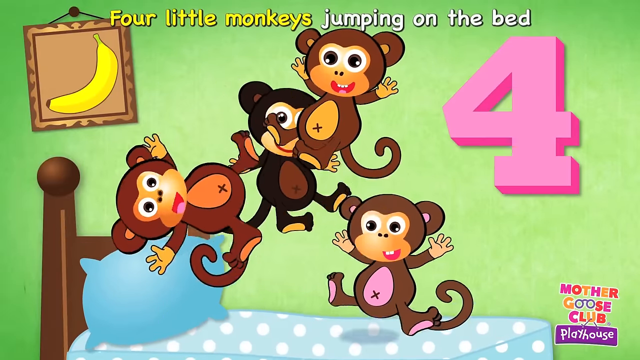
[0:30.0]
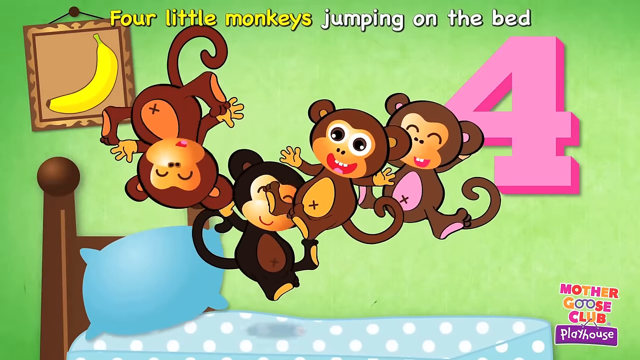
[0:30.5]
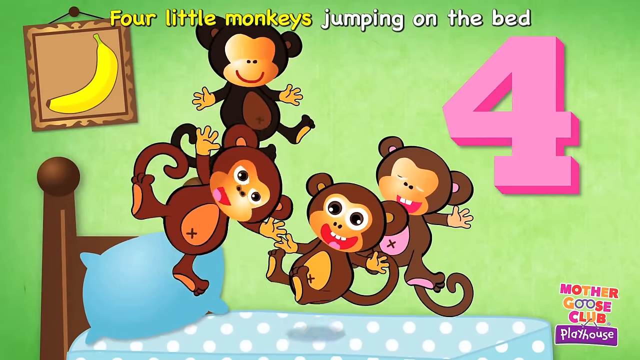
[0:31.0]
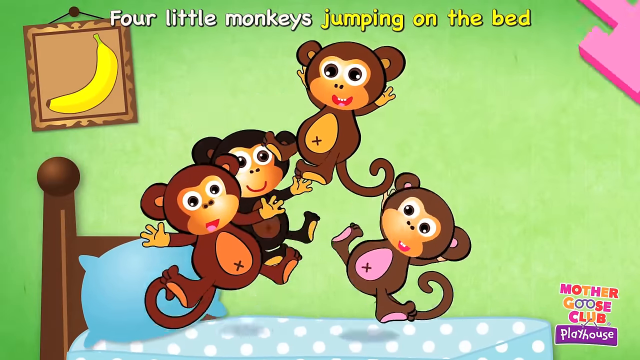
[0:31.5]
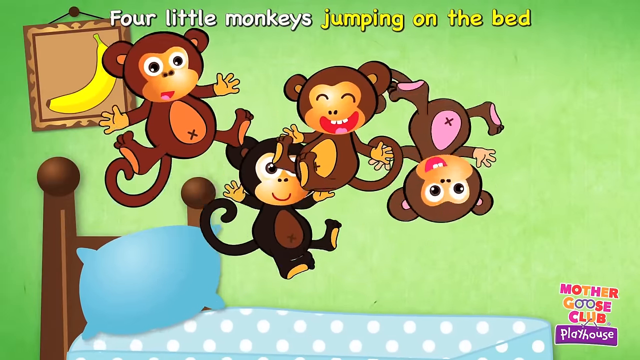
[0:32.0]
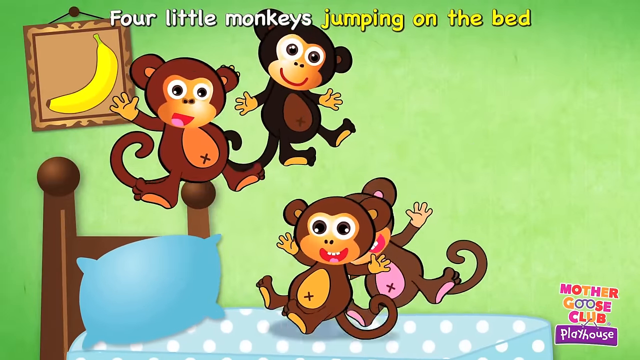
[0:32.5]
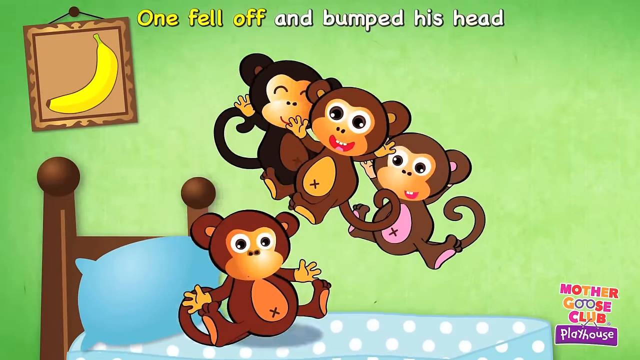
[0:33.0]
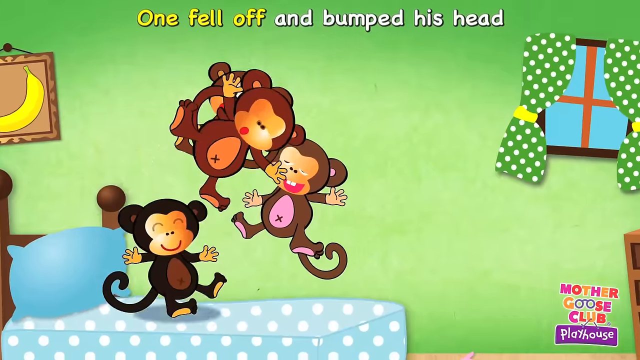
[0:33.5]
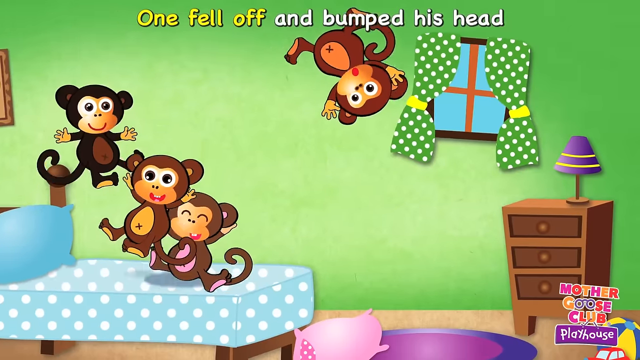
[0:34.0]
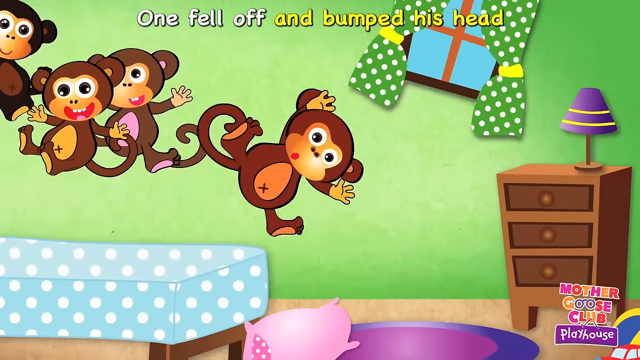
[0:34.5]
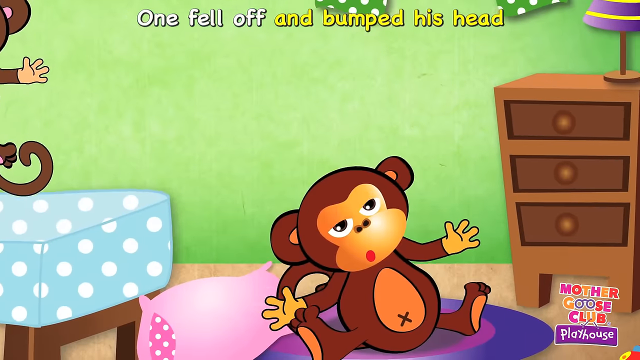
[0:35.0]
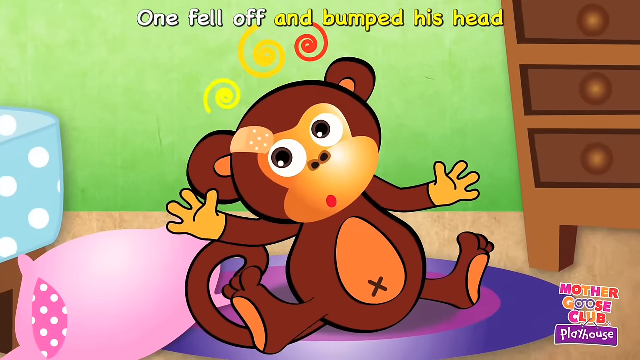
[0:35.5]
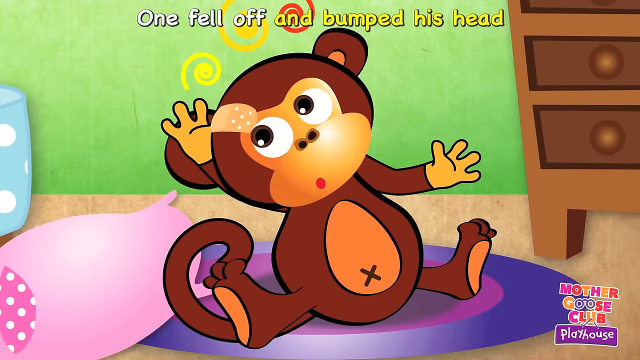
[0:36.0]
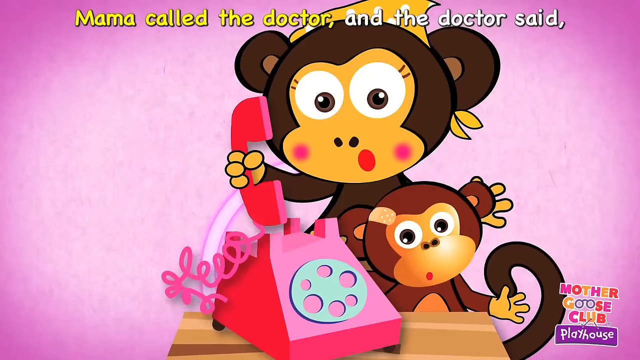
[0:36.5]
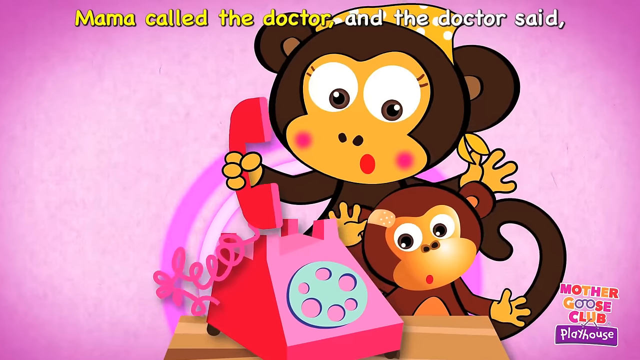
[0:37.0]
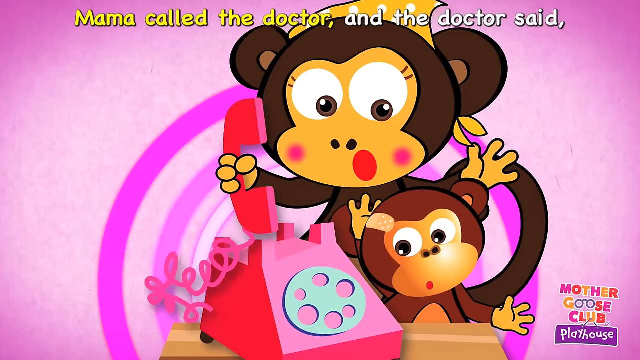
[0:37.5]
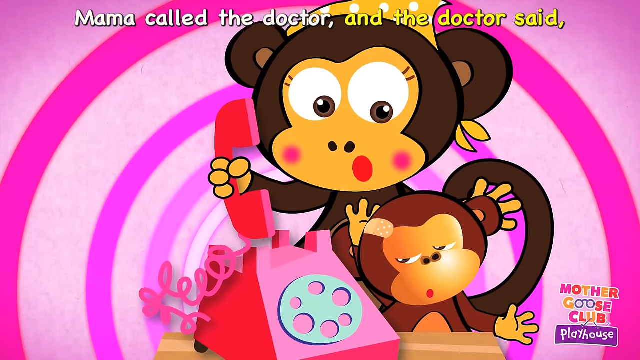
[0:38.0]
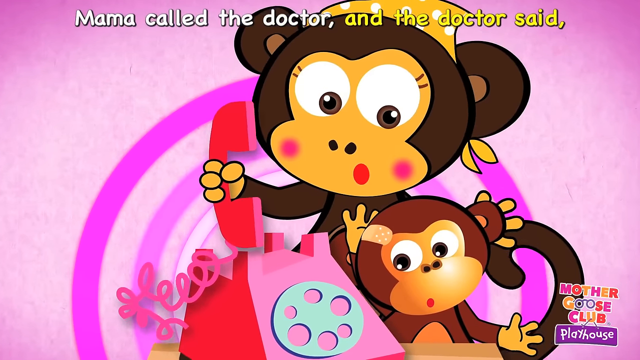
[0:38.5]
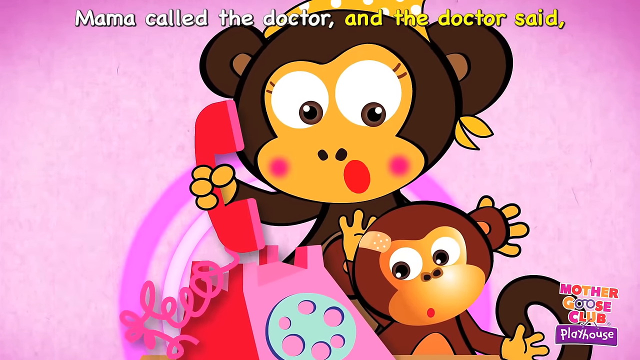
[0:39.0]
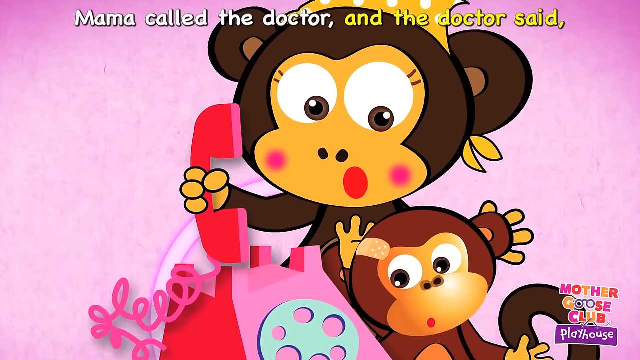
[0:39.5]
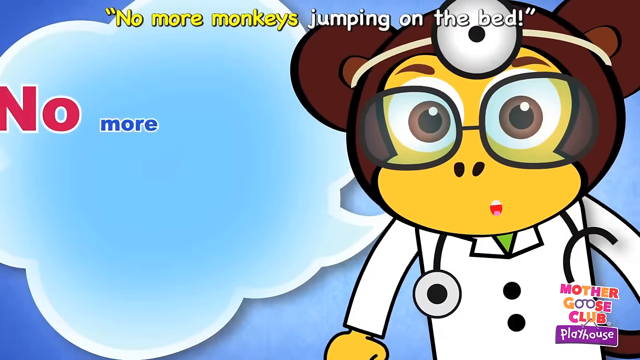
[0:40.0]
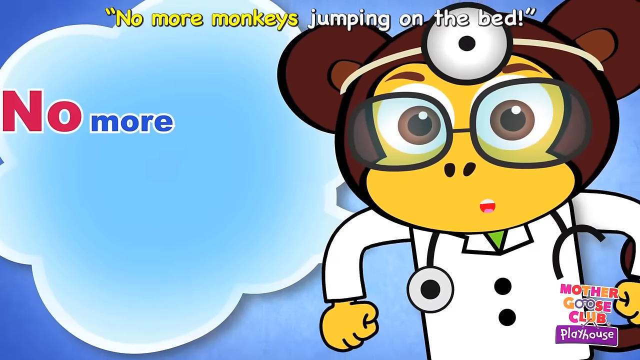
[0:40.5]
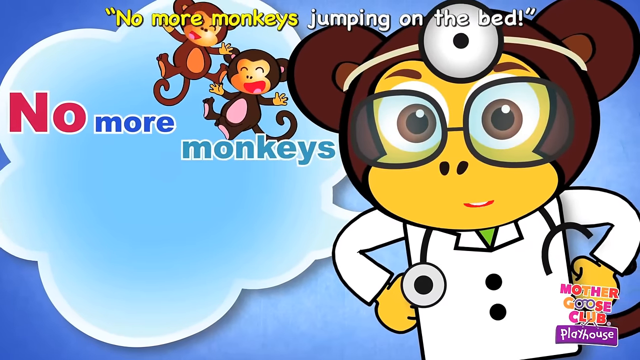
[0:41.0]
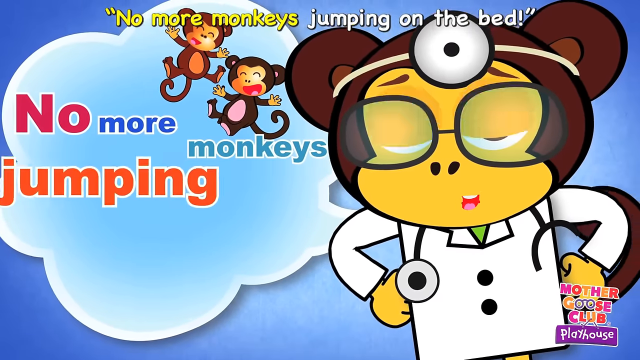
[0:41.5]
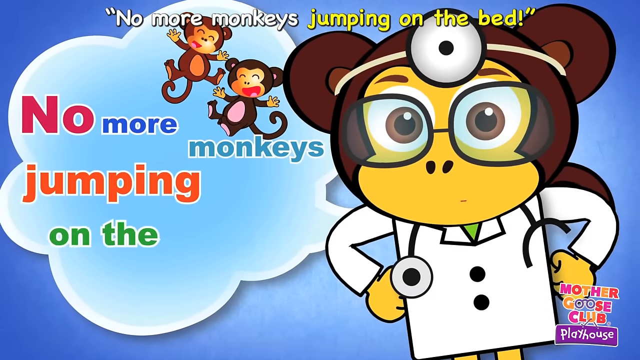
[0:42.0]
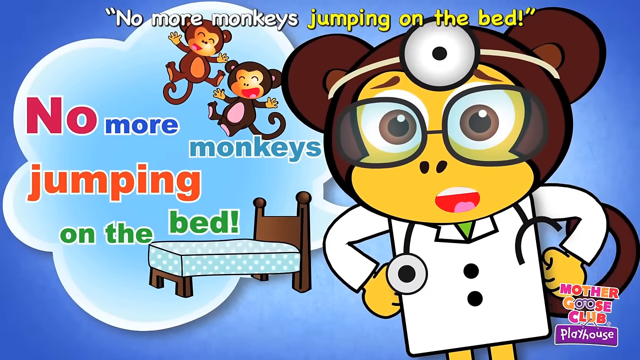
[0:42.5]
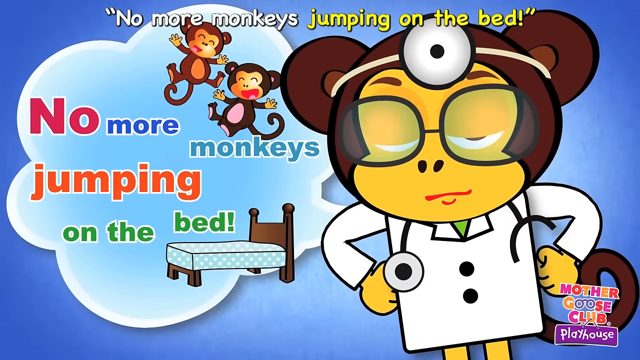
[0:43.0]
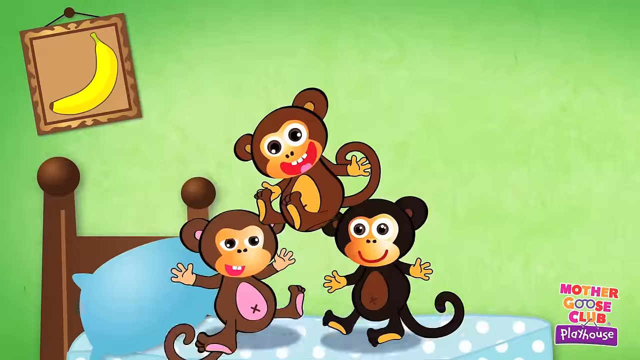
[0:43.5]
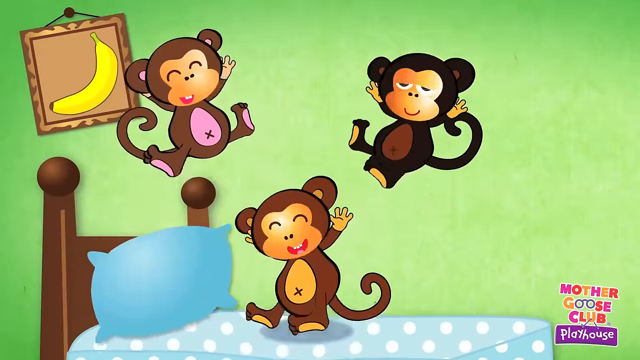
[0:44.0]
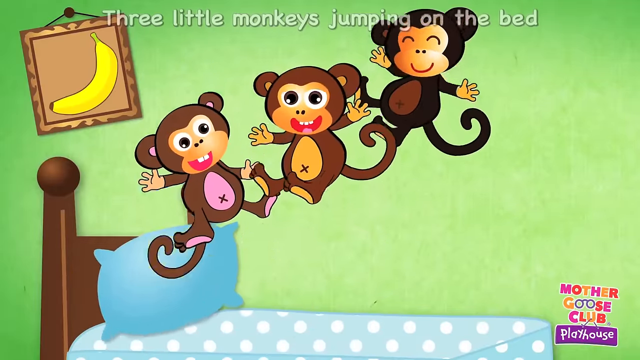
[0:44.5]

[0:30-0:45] Four monkeys, three brown and one black, jump on the bed. One falls off, a brown one with an orange belly and orange ears, landing on a little purple carpet and hitting his head on the window rather than the dresser. The bandage goes on the viewer's left, the monkey's right. The number four appears in bright pink. The pink pillow has fallen off the bed and is on the floor. The mom looks about the same, with the pink phone now on the left-hand side, and this time pink concentric circles grow behind her. A little thought bubble shows two monkeys and a little picture of the bed; two monkeys, a brown one and a black one, are up in the corner, probably the ones that have fallen off. The doctor, with brown ears, a white jacket with a little green piece in between and a little stethoscope, is on the right side of the screen instead of the left, and tells them no more monkeys jumping on the bed. The banana picture is still there.